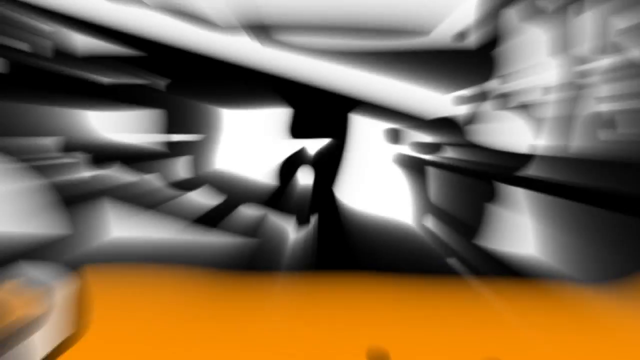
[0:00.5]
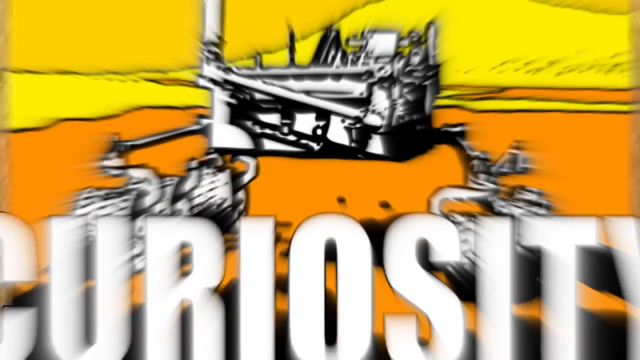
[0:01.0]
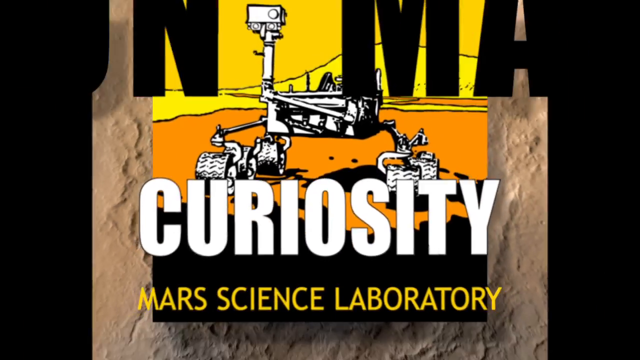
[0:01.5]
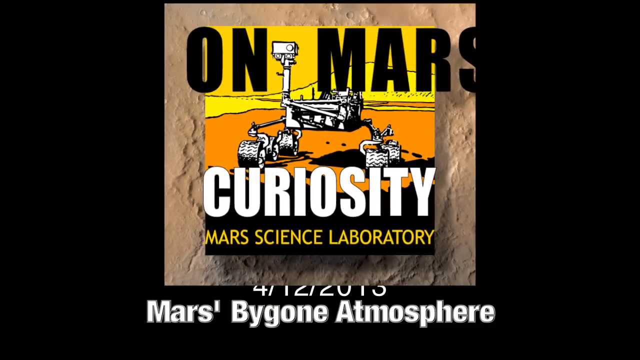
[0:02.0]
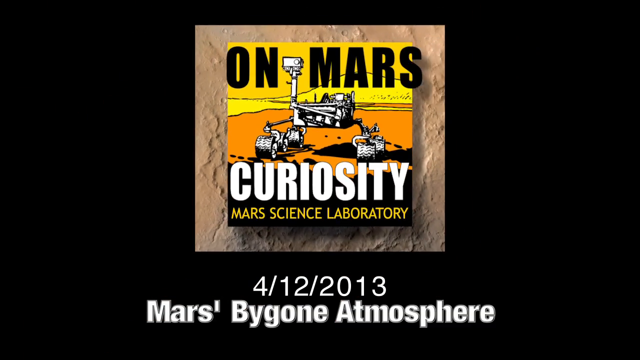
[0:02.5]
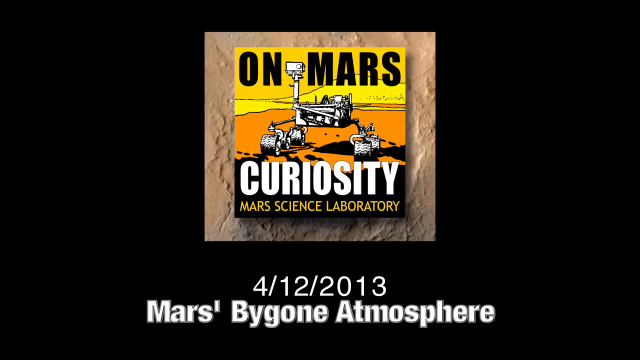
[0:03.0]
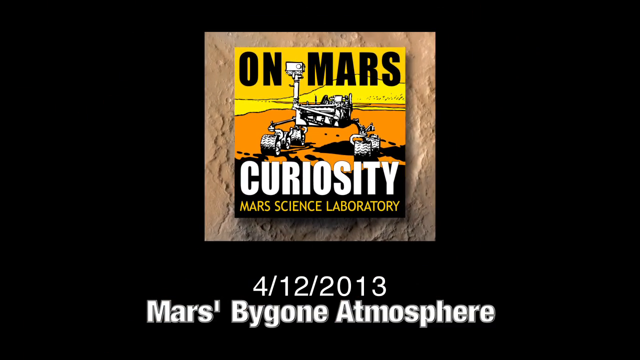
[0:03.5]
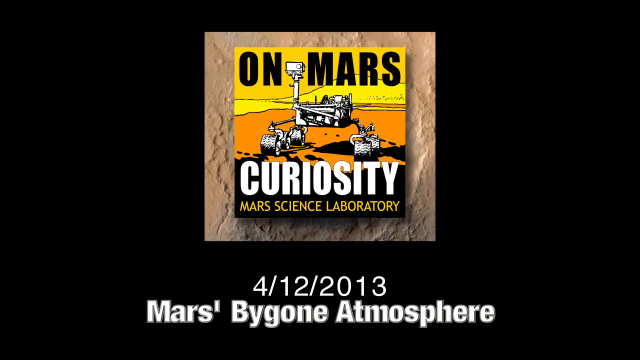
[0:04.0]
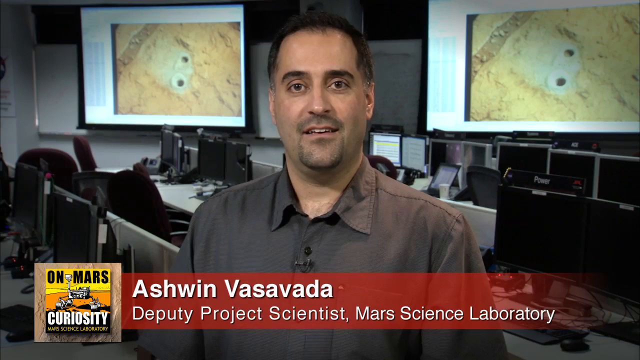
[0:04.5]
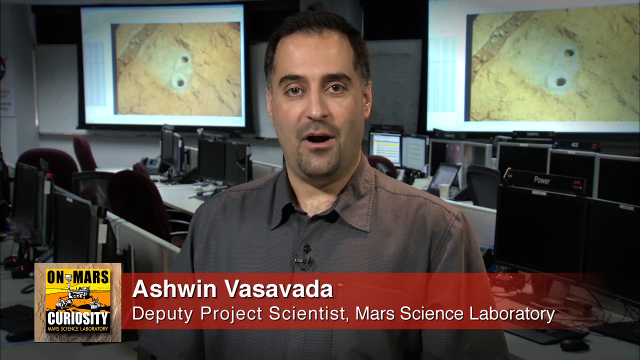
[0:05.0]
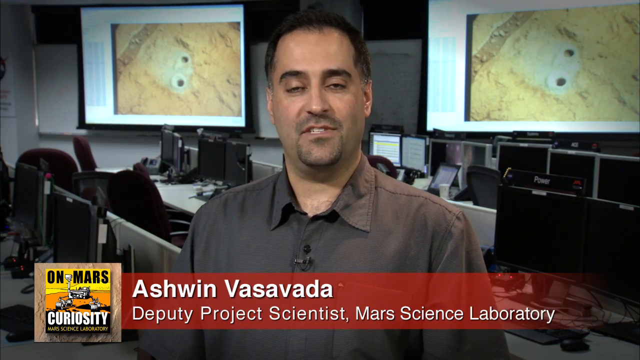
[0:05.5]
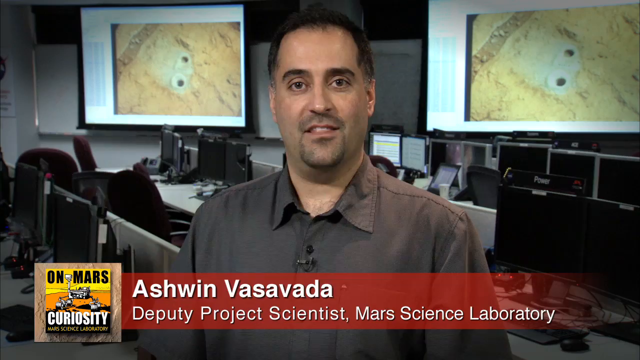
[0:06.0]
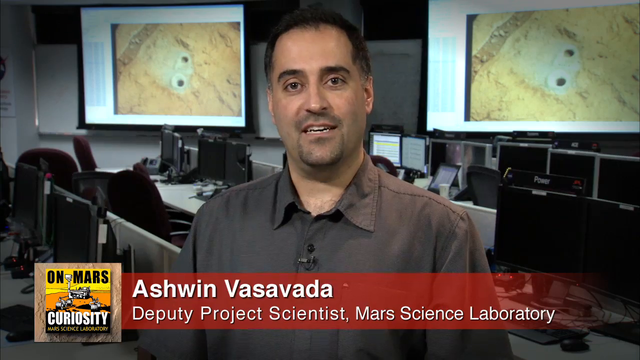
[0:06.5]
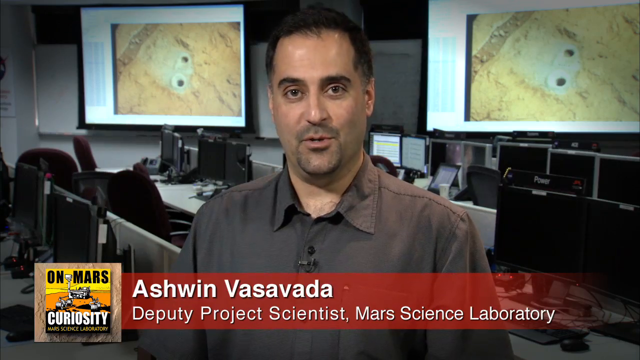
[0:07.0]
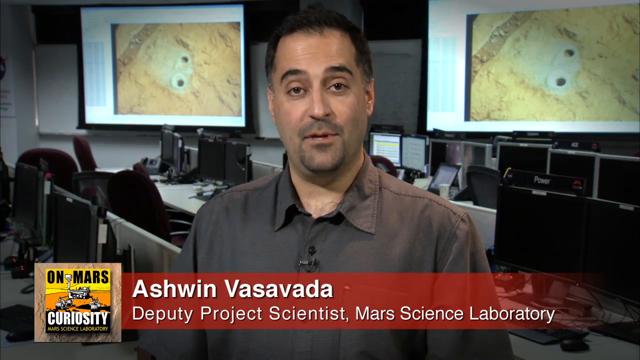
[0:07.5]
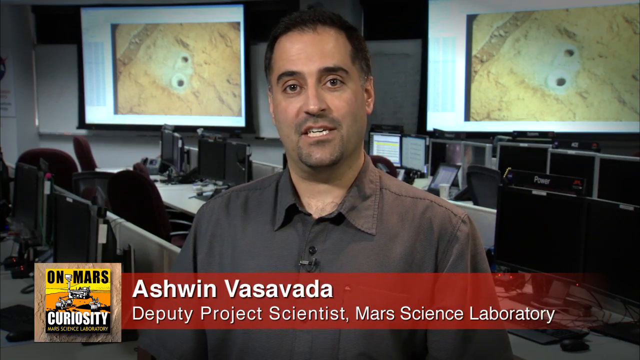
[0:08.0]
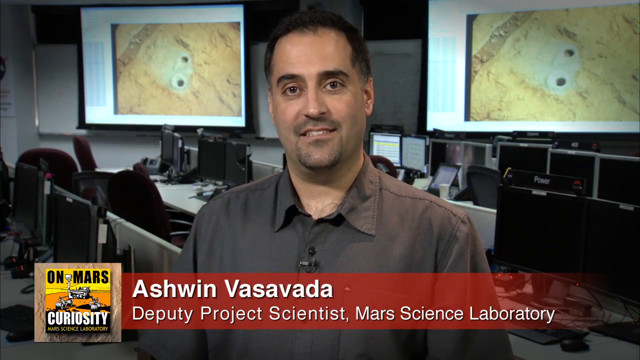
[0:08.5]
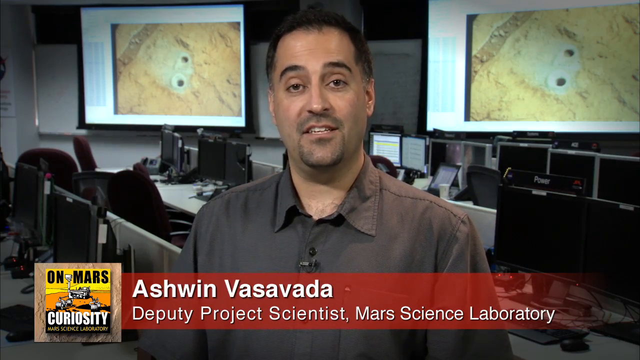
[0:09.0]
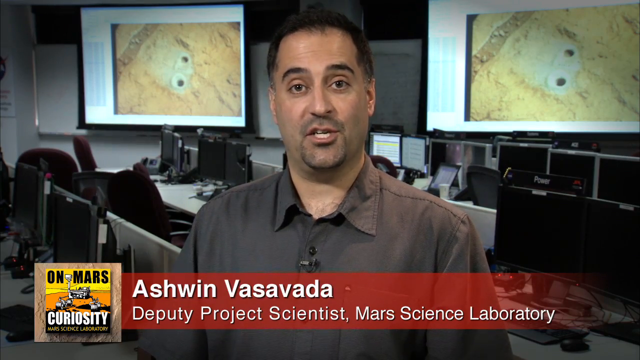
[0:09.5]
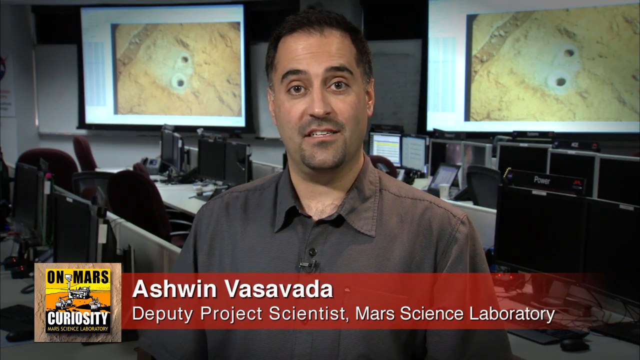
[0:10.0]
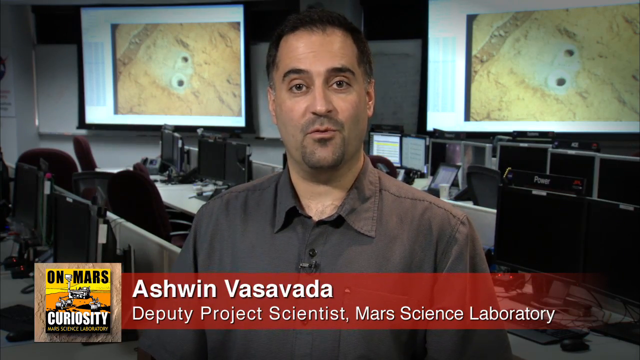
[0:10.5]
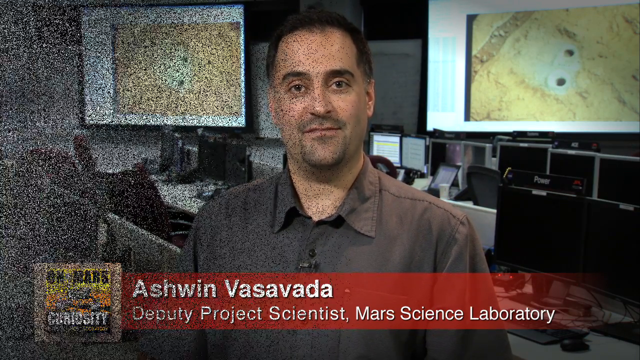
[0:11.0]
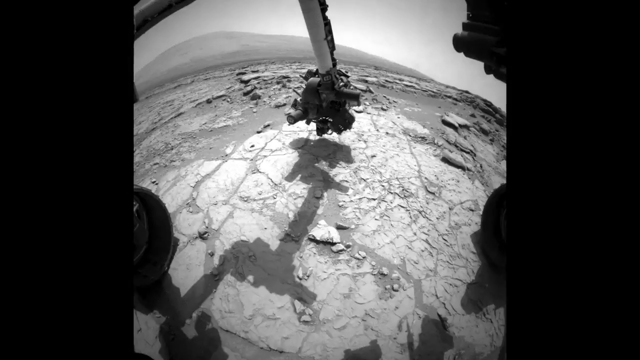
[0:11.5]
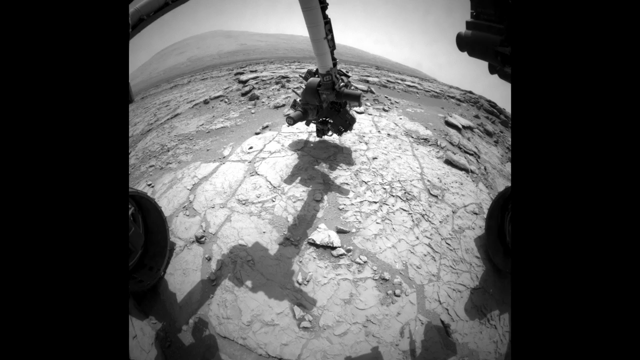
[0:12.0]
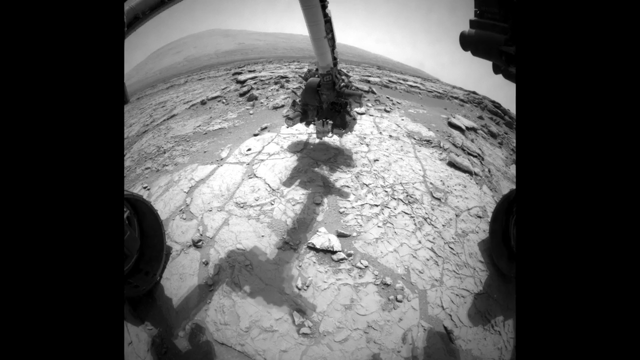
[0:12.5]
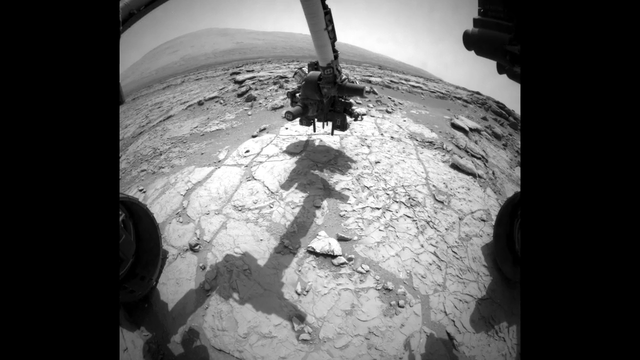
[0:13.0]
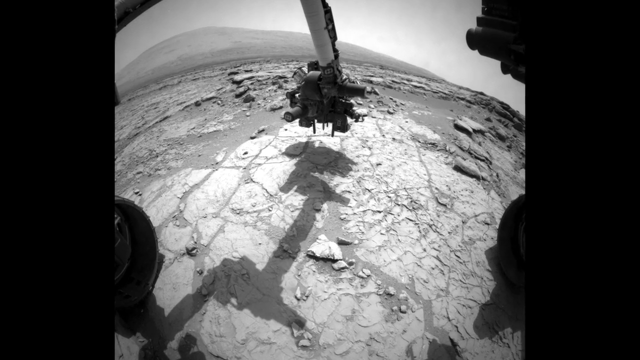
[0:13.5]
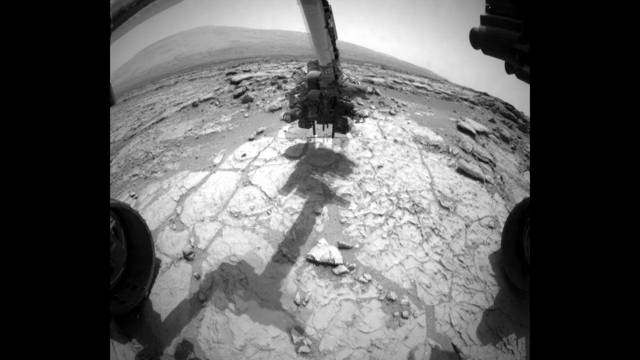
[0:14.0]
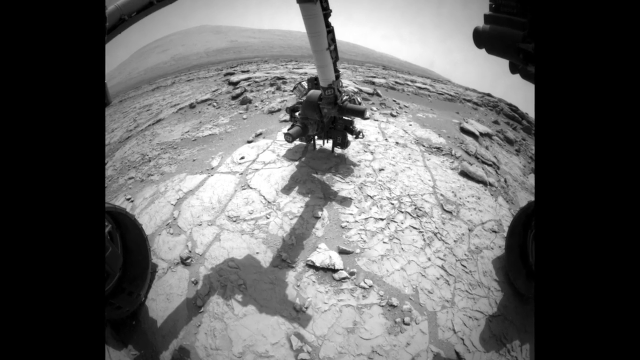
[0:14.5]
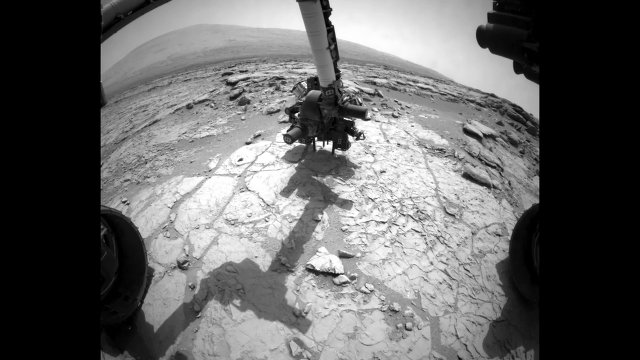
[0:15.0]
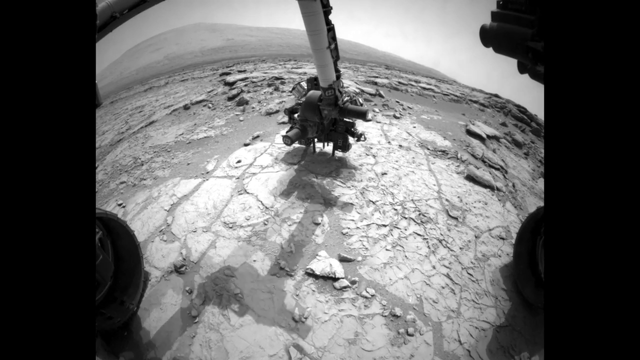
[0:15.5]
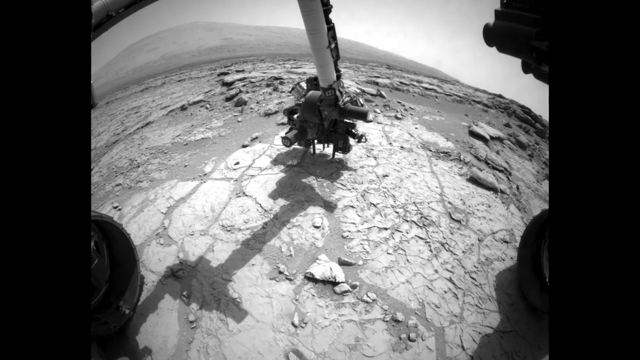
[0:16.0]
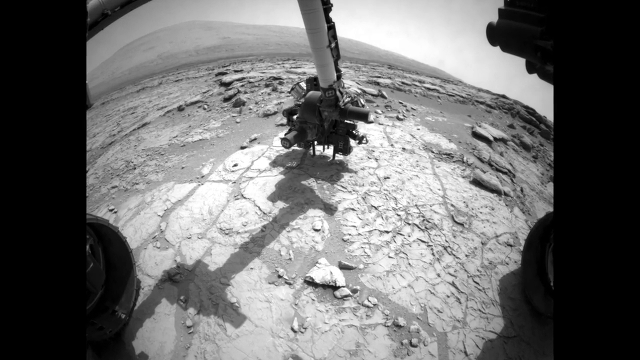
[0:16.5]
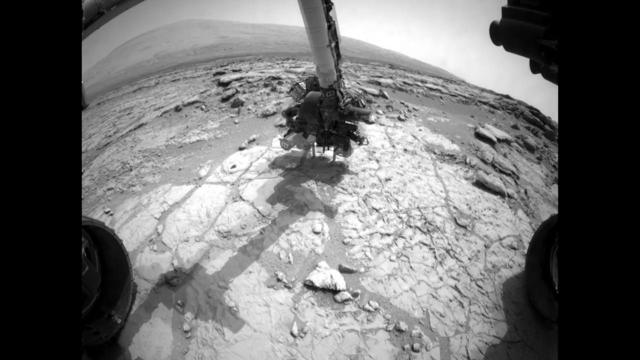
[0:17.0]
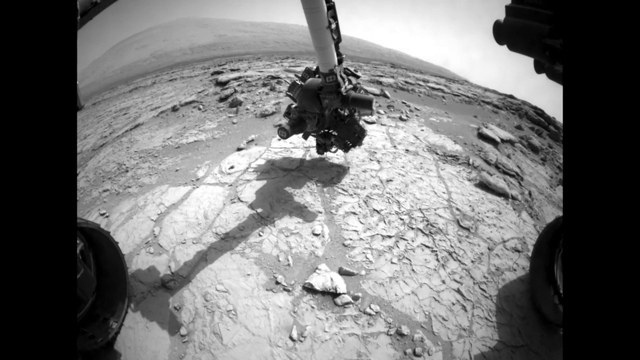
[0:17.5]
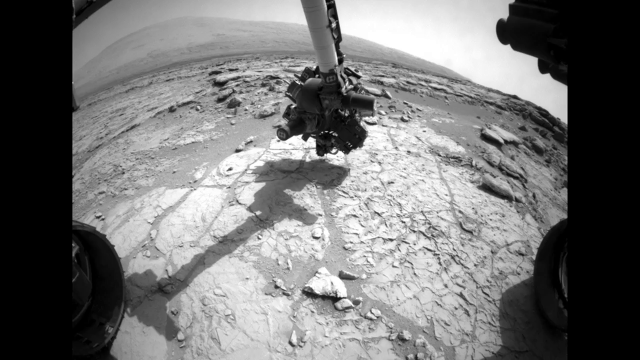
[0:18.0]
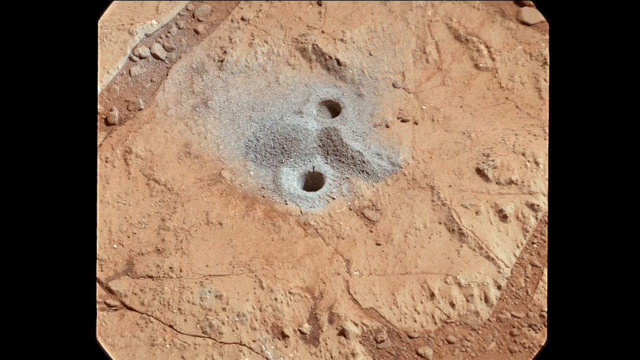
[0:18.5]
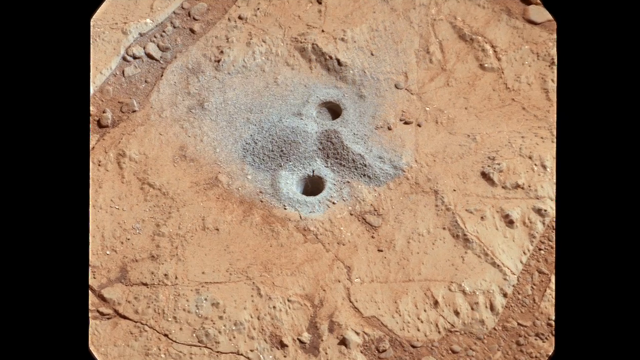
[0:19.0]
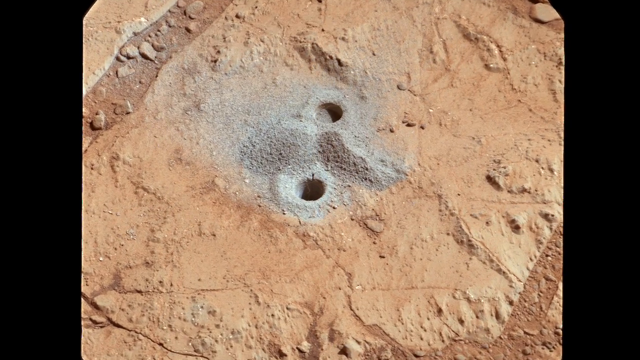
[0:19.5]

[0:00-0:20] A graphic appears on the screen, apparently showing a rover, with text reading "On Mars Curiosity Mars Science Laboratory", a date underneath, "4/12/2013", and another phrase, "Mars' Bygone Atmosphere"; it looks like a logo of the Mars rover. The scene switches to a man in a tan brown shirt staring at the camera. Behind him is a row of desks with computers on them, and in the far back are two screens with images on them. Text at the bottom reads "Ashwin Vasavada Deputy Project Scientist, Mars Science Laboratory", and the man appears to be talking. The scene then switches to black-and-white images of what looks like the Mars rover on Mars, with a mechanical arm moving up and down. Next comes a color image of what look like some holes in the ground.